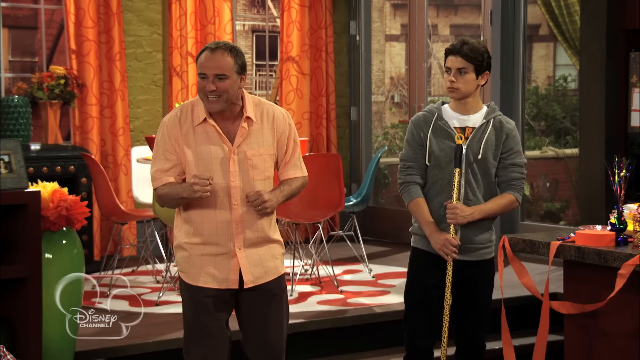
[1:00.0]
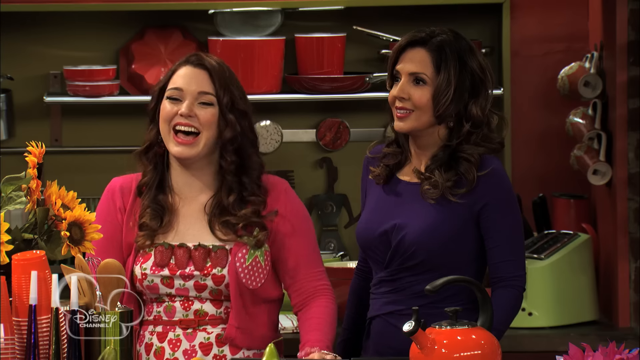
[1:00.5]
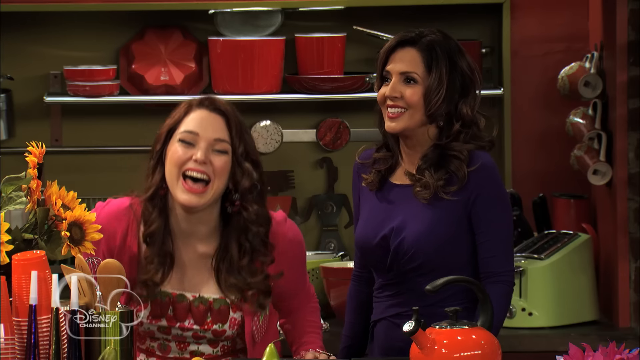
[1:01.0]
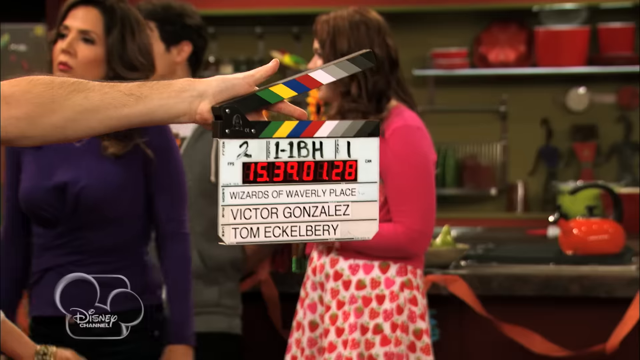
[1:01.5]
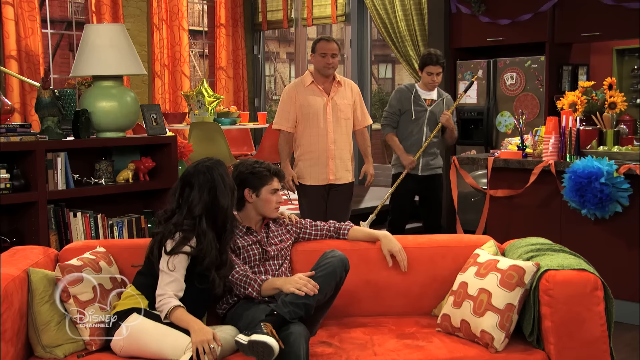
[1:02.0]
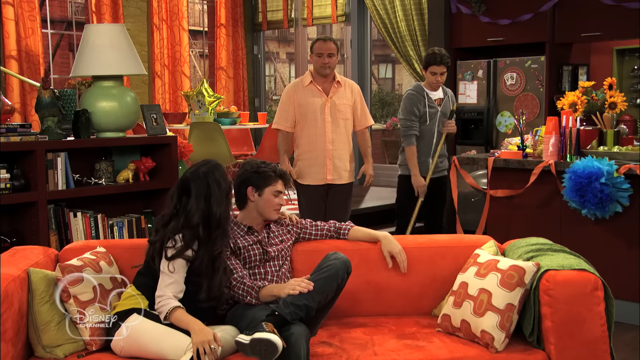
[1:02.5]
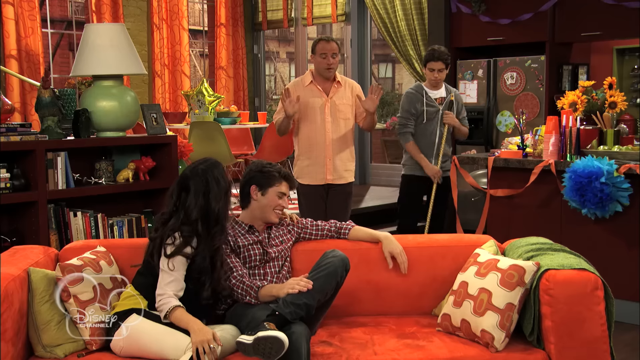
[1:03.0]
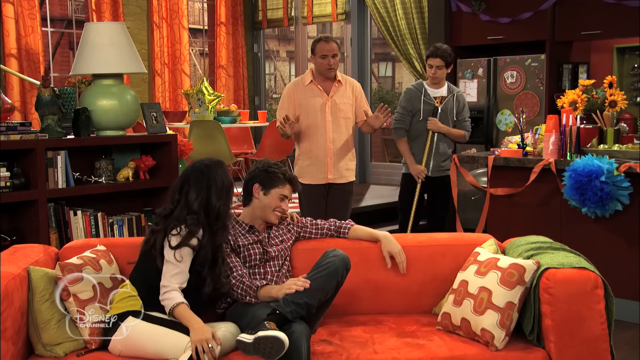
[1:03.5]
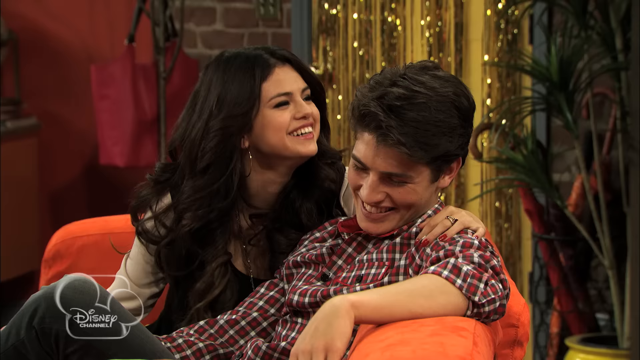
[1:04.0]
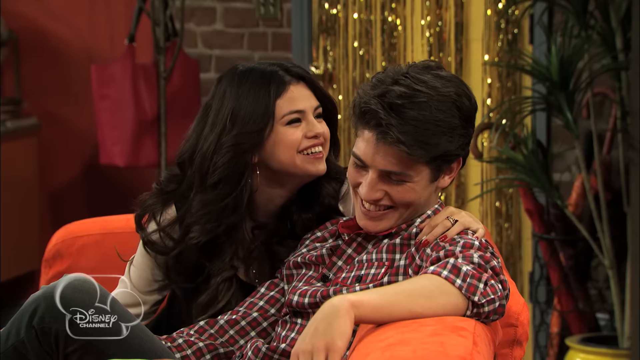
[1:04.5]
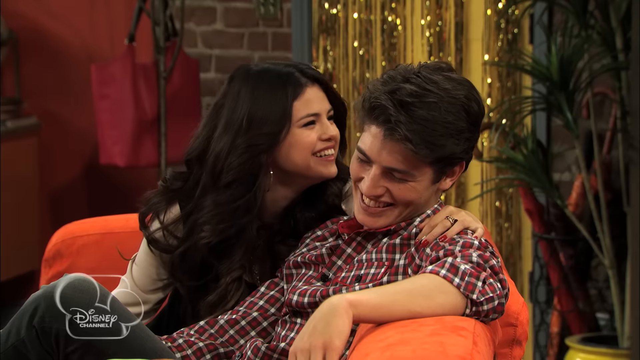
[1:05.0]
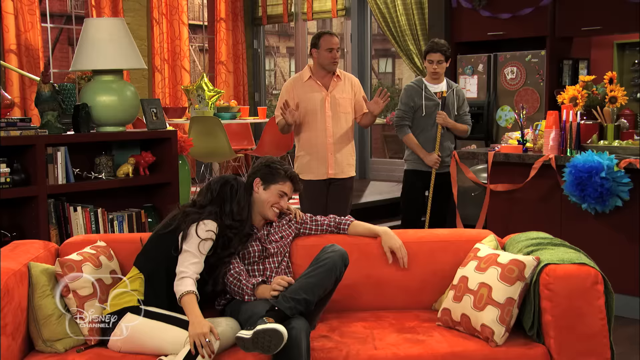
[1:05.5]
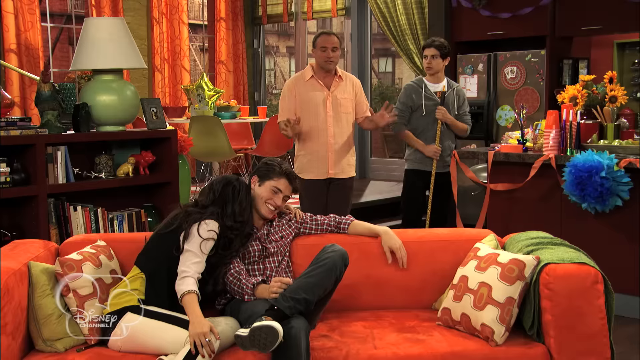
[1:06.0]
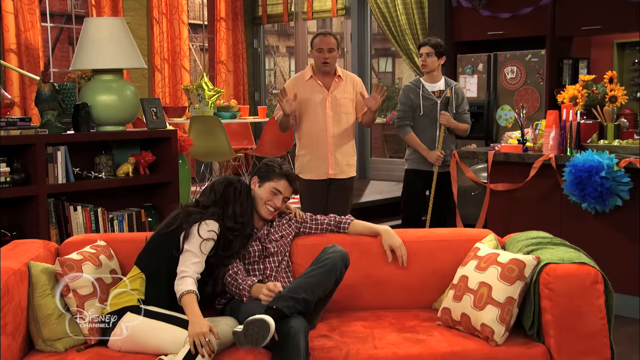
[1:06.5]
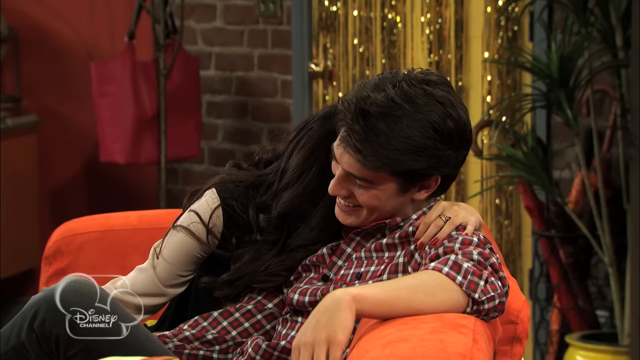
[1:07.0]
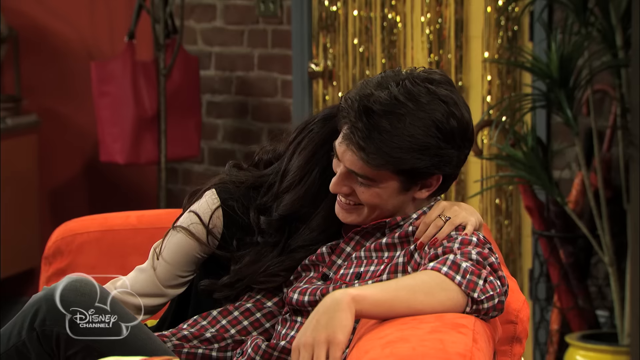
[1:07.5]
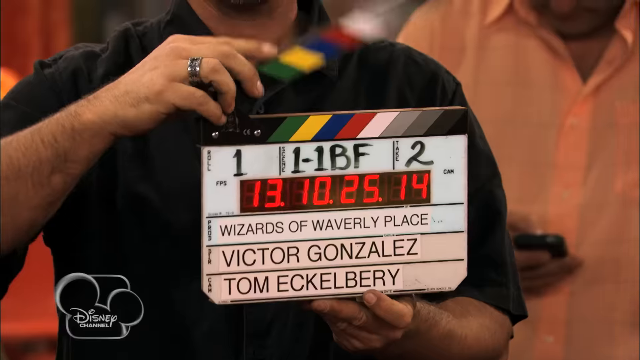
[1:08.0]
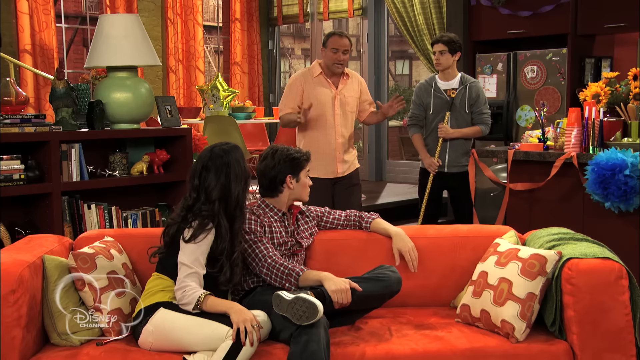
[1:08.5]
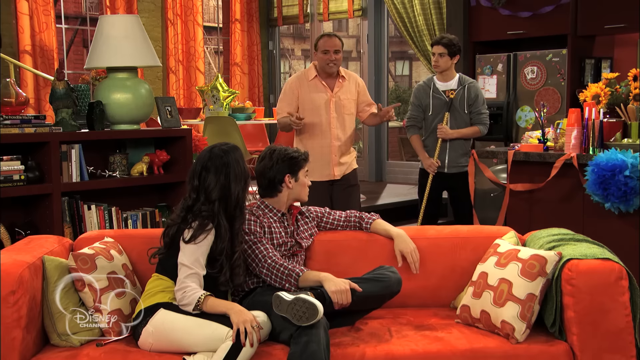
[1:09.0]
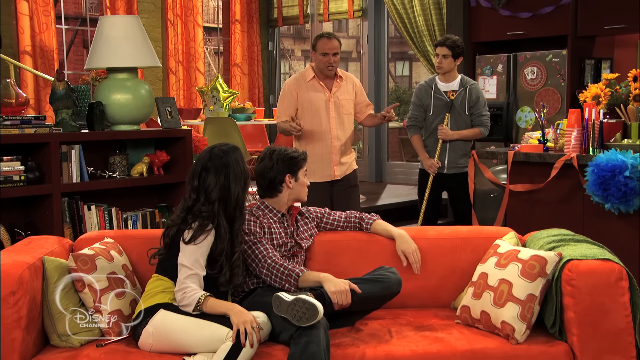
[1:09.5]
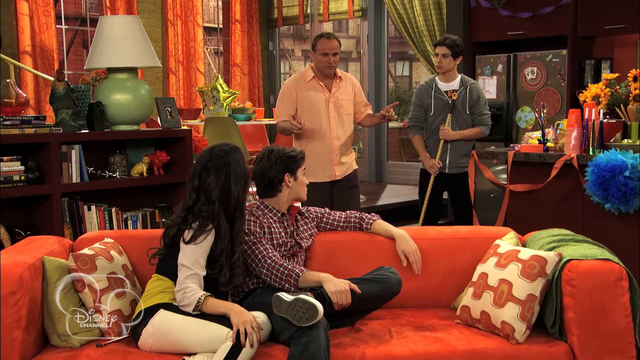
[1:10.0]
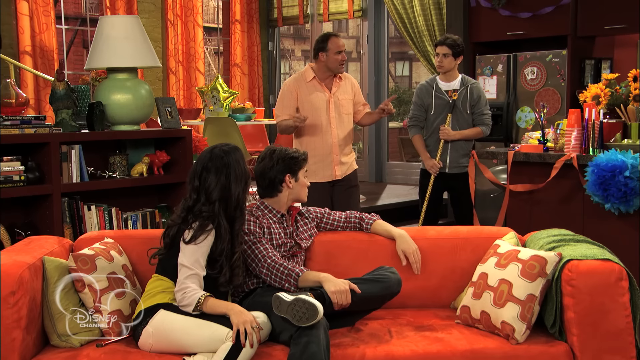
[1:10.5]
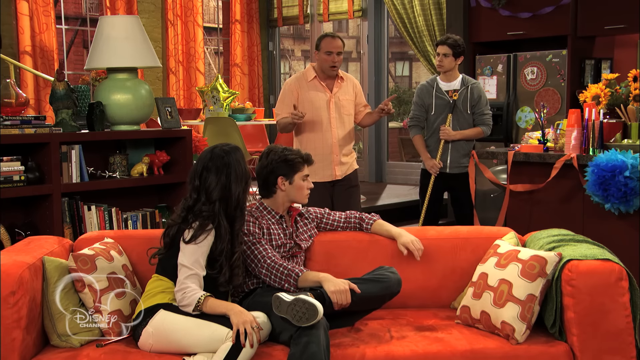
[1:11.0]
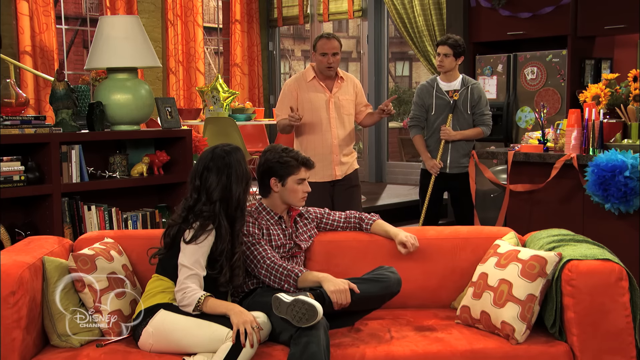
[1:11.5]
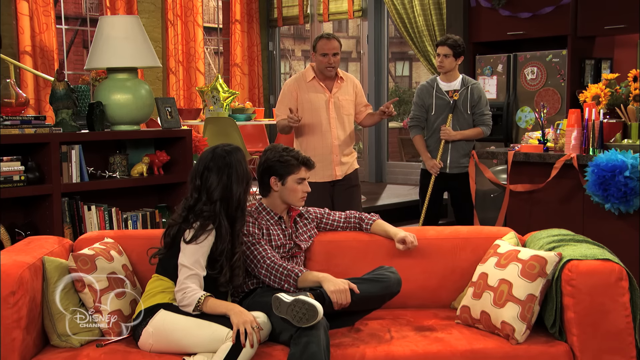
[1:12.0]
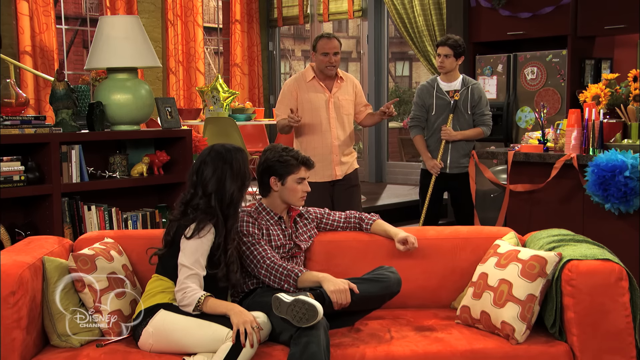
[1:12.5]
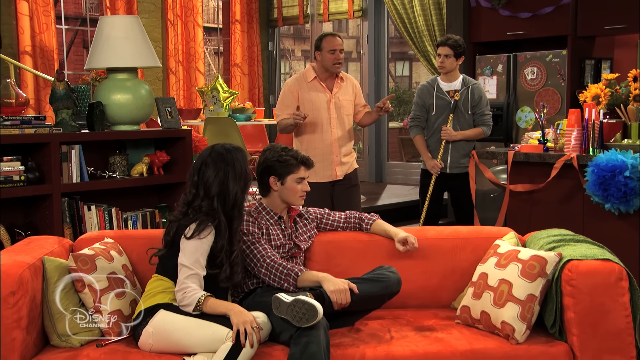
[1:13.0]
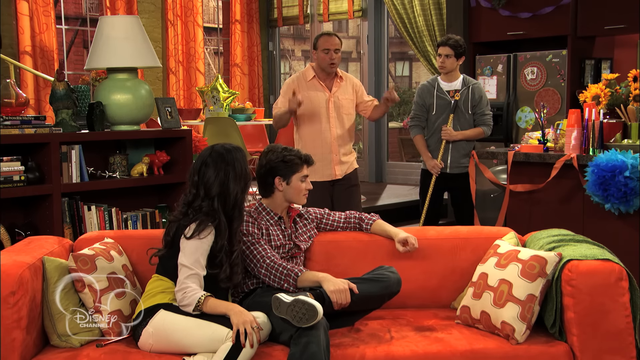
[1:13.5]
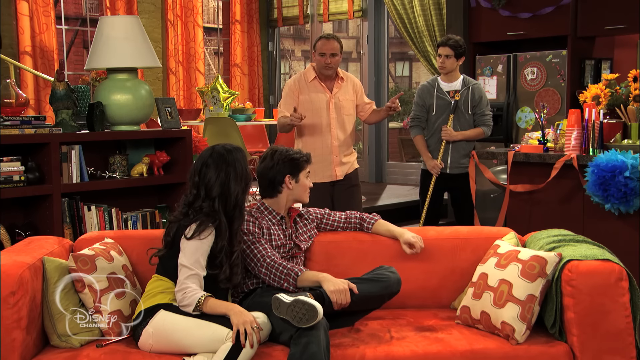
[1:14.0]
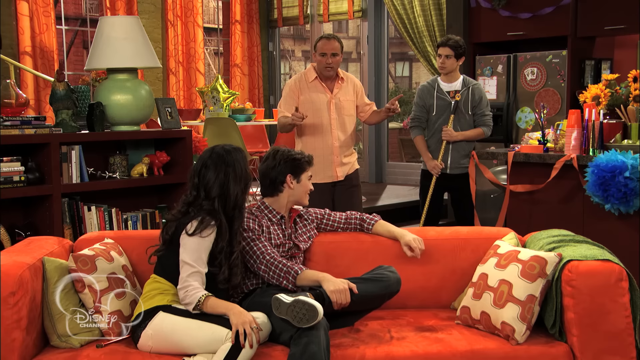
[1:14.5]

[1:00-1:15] The man in the orange polo shirt and the kid in the gray jacket appear, then the shot quickly switches to two adult women. The one on the right wears a long-sleeve purple shirt, and the one on the left wears a dress with strawberries and a pink shirt. There are yellow sunflowers to her left. The wall in the background is dark green with different objects hanging up. The woman in the strawberry dress starts laughing. After another action cut scene, the camera angle changes: the girl with black hair and the kid in the checkered shirt are sitting on an orange sofa, and behind them are the man and the other kid in the gray sweatshirt. The sweeping starts, and the kids sitting down start laughing. The man in the orange jacket talks and uses hand motions, making the other two laugh. After another action cut scene, the man points in two different directions with his index fingers while talking, seen from the front.